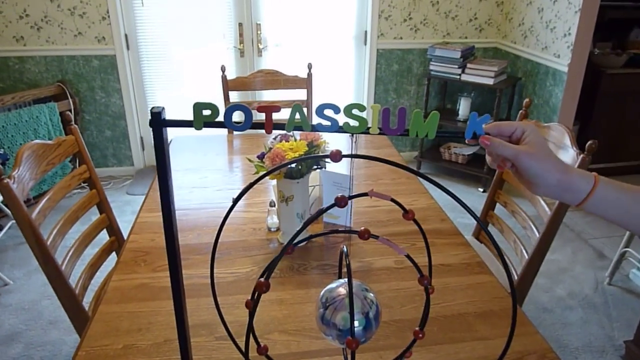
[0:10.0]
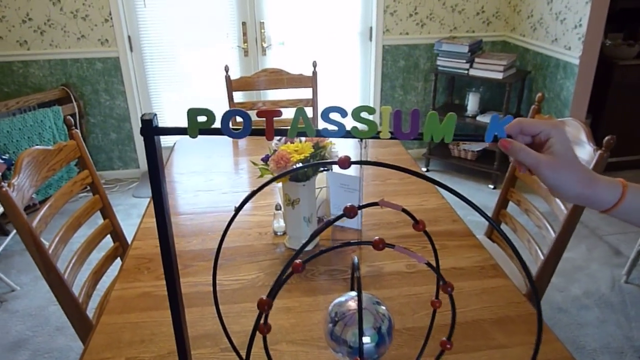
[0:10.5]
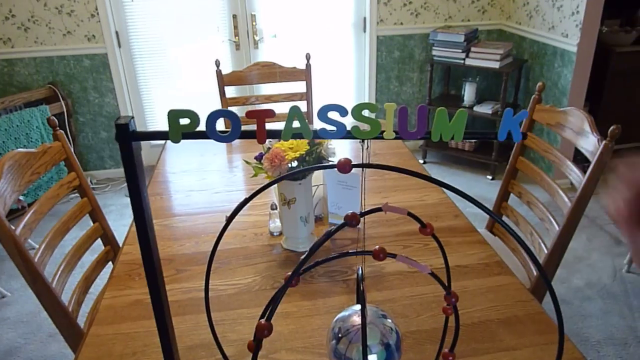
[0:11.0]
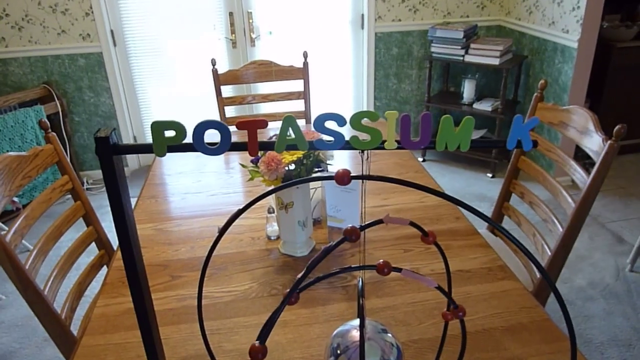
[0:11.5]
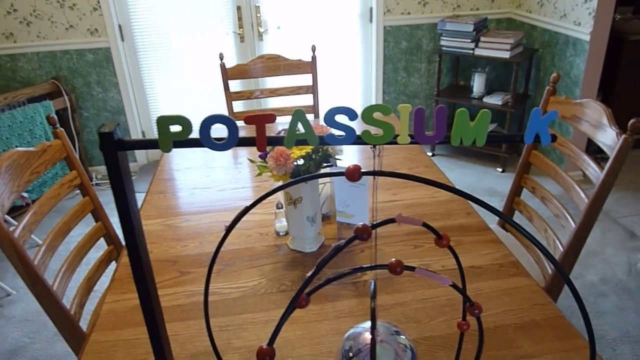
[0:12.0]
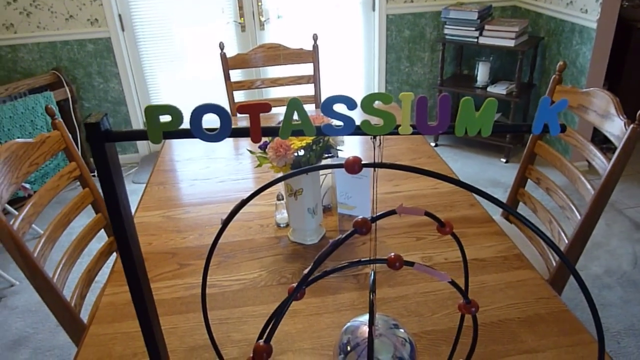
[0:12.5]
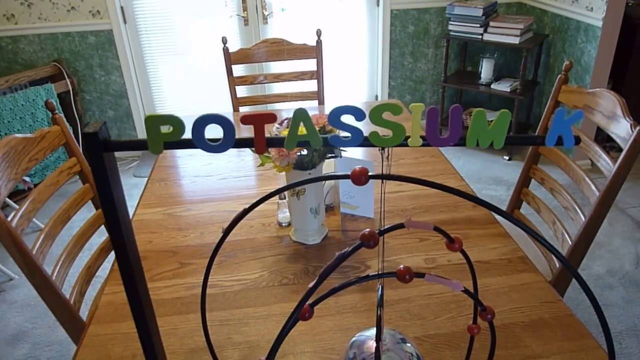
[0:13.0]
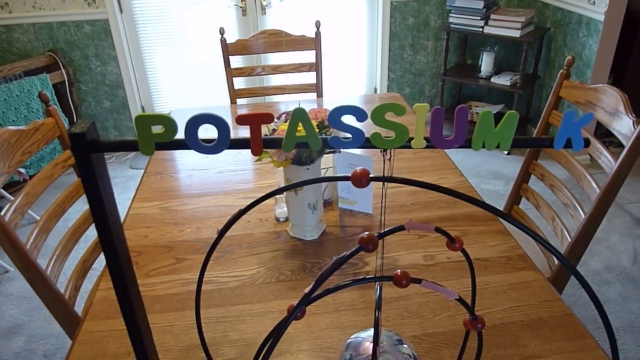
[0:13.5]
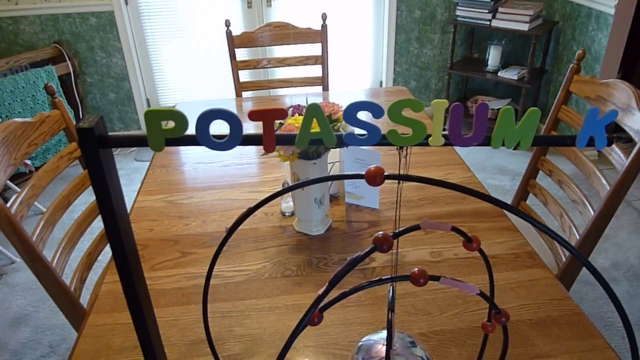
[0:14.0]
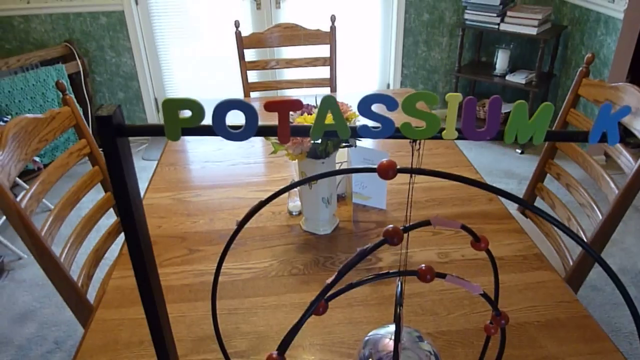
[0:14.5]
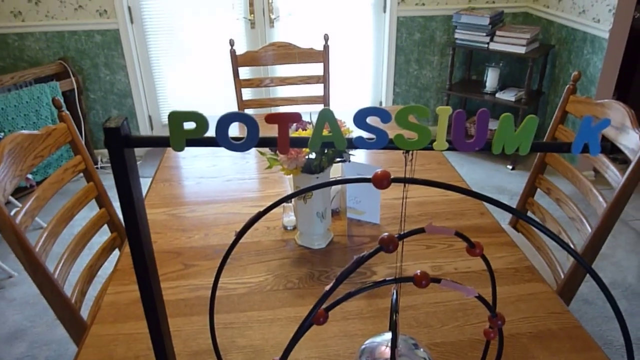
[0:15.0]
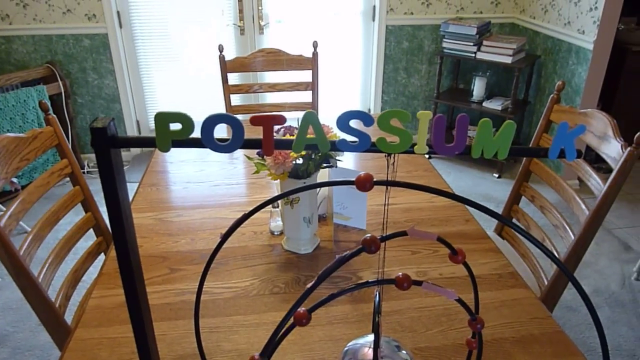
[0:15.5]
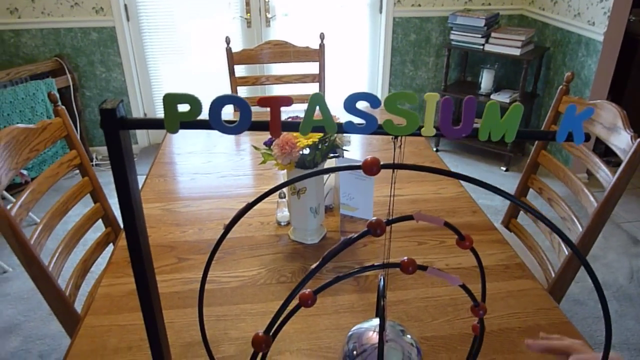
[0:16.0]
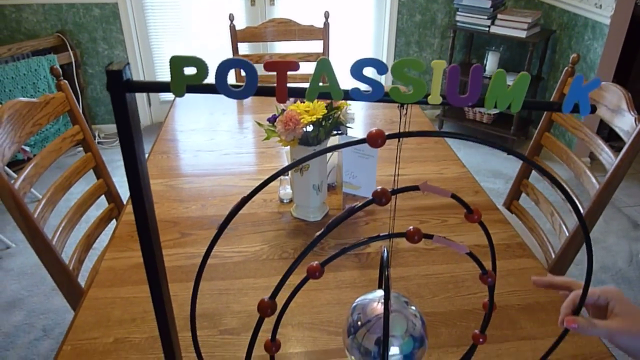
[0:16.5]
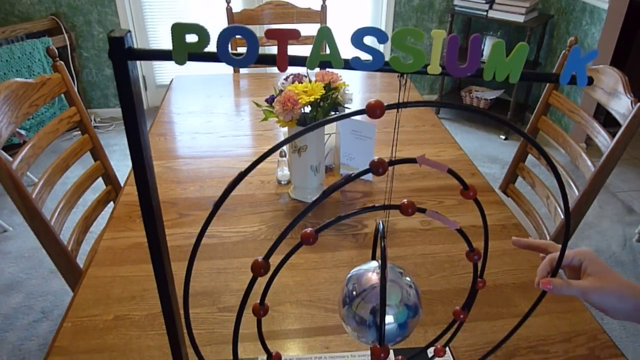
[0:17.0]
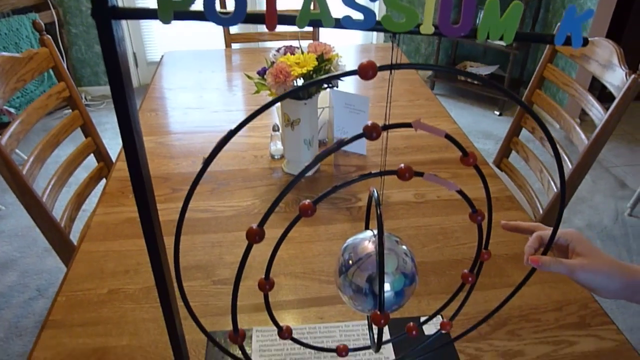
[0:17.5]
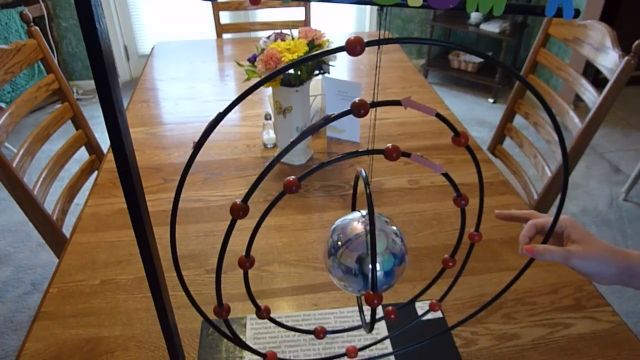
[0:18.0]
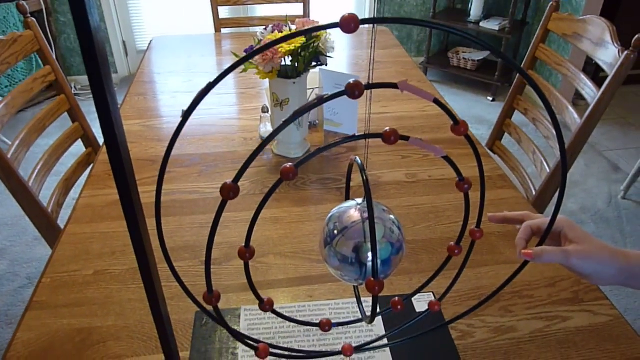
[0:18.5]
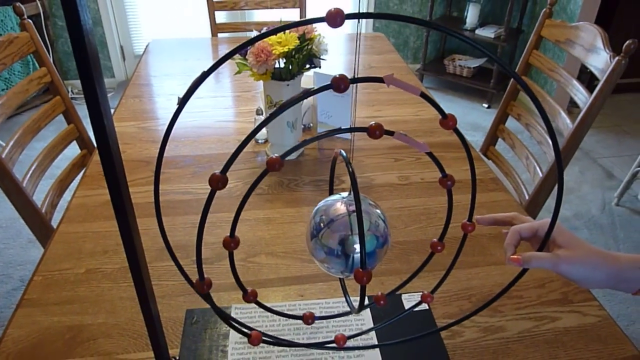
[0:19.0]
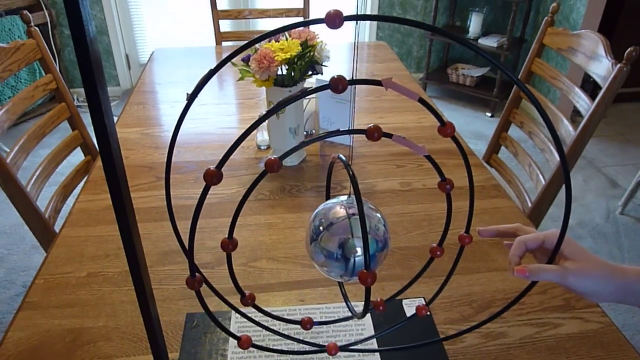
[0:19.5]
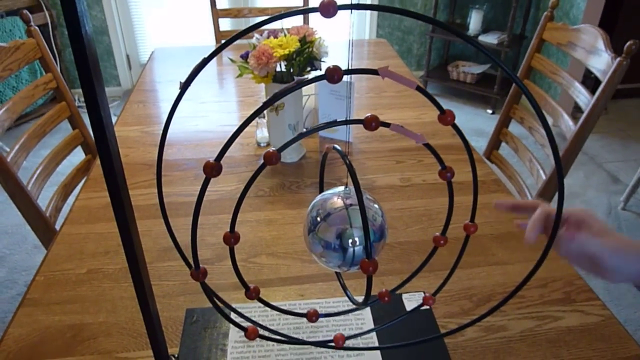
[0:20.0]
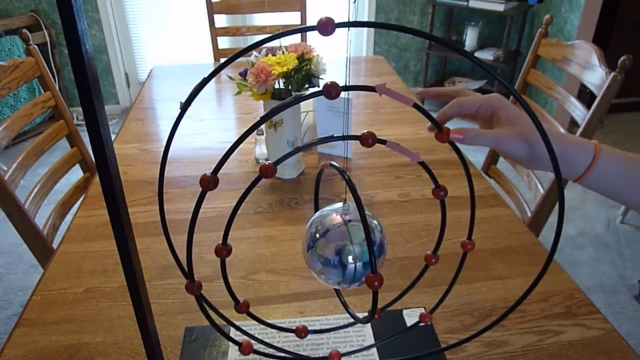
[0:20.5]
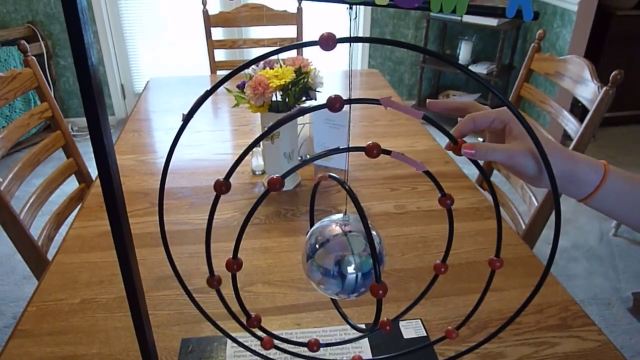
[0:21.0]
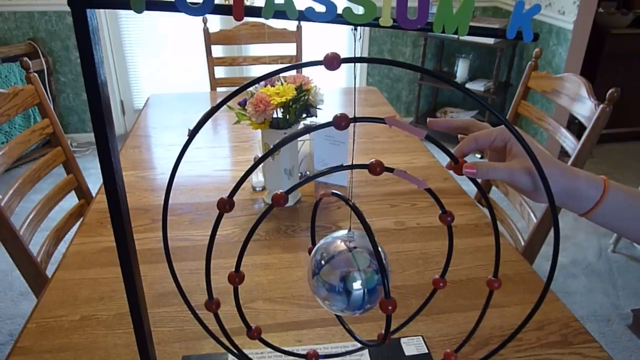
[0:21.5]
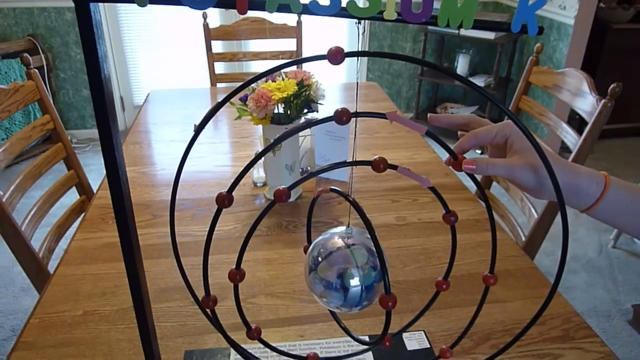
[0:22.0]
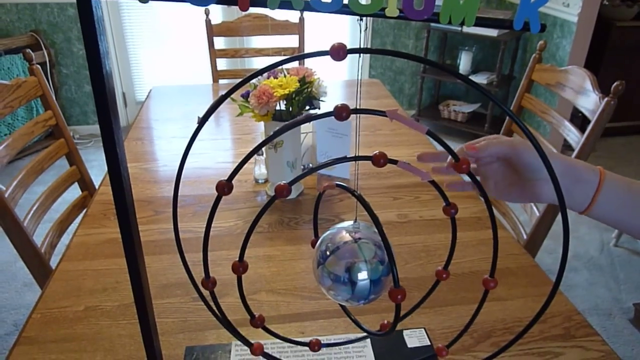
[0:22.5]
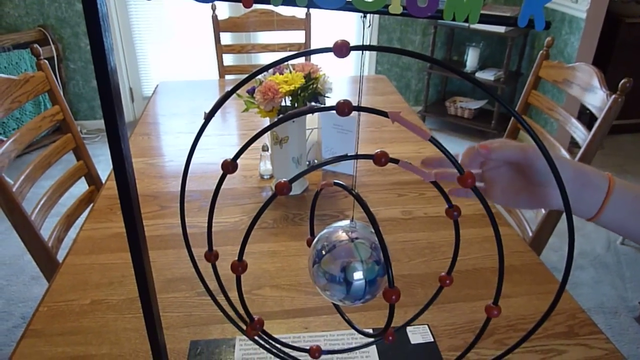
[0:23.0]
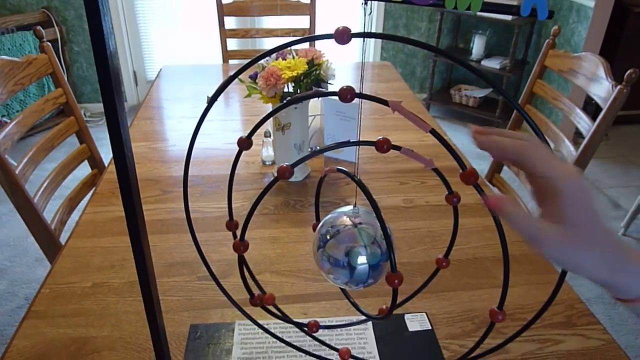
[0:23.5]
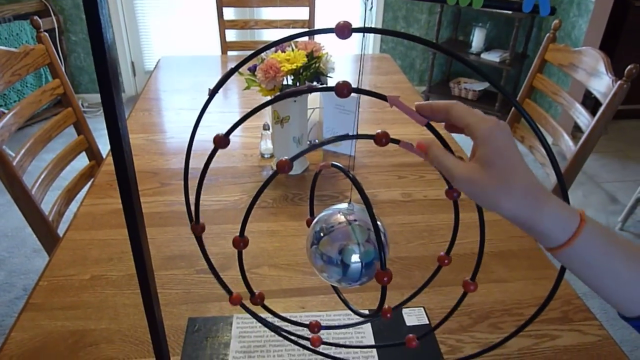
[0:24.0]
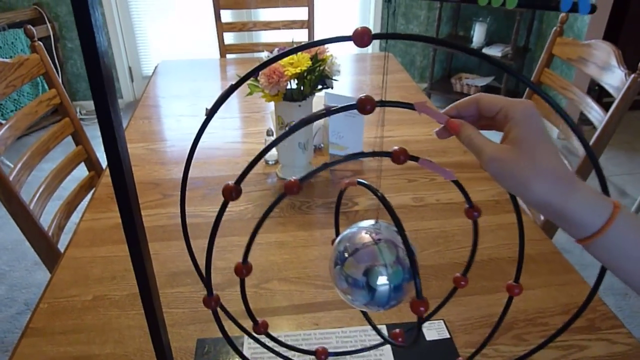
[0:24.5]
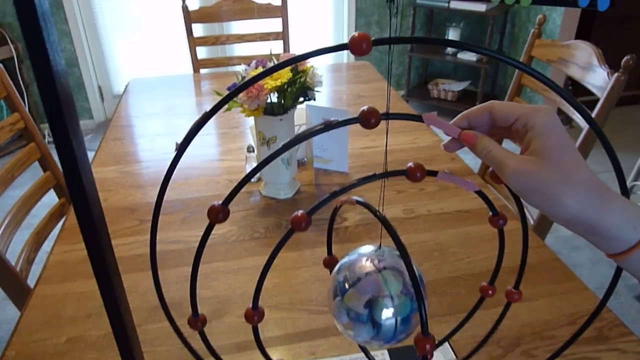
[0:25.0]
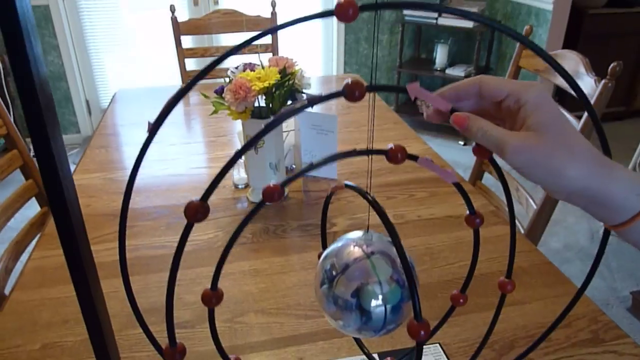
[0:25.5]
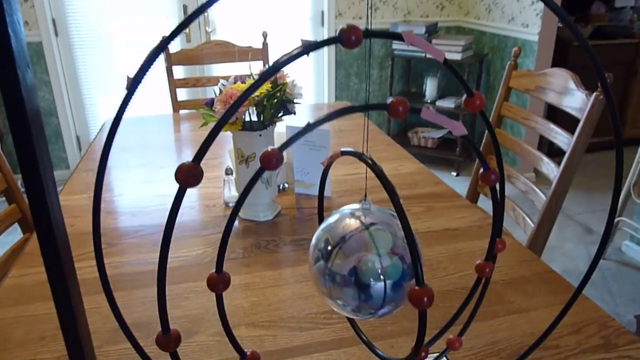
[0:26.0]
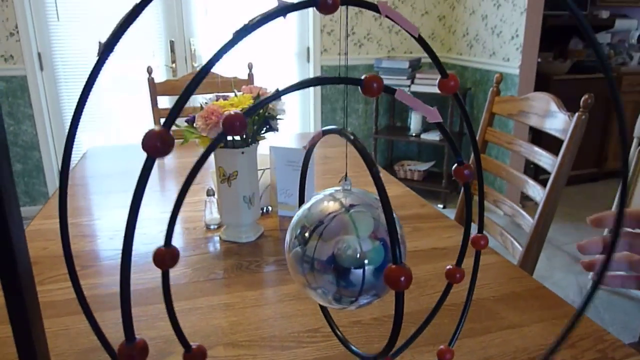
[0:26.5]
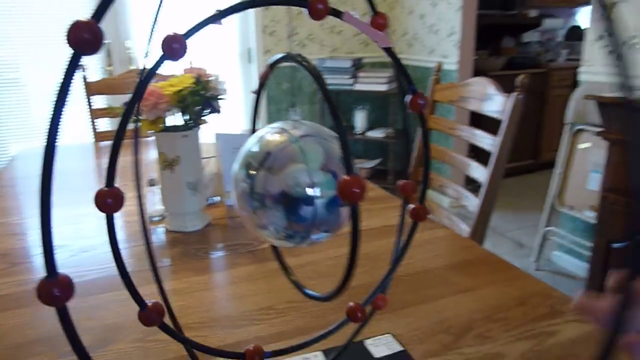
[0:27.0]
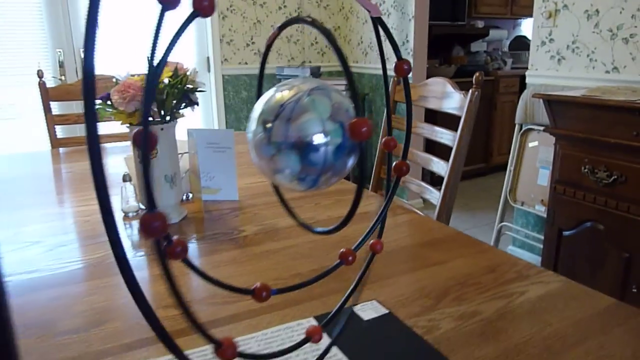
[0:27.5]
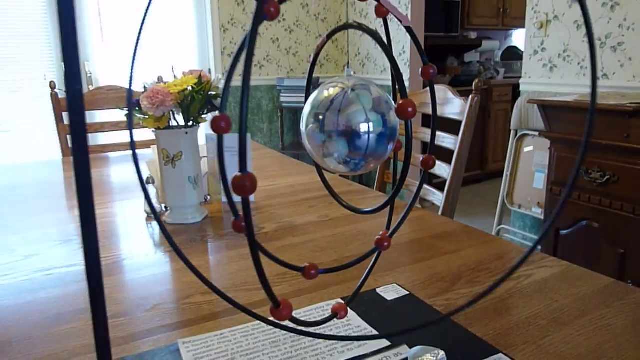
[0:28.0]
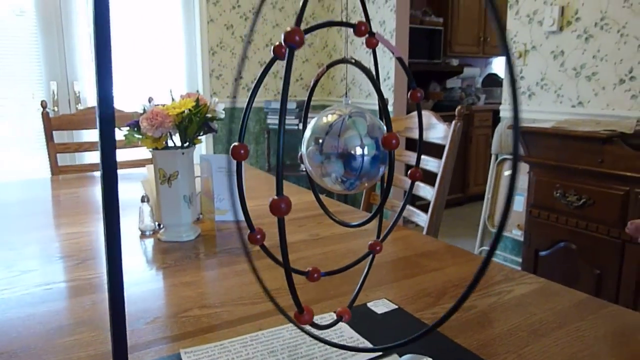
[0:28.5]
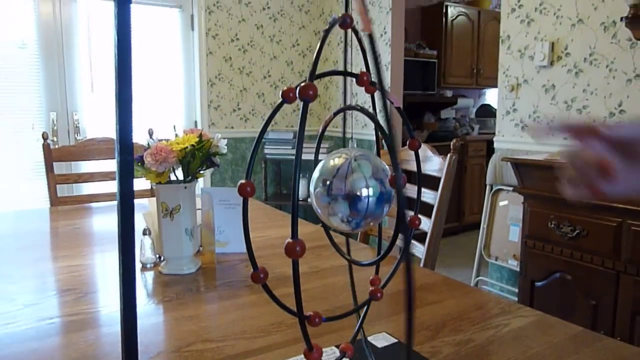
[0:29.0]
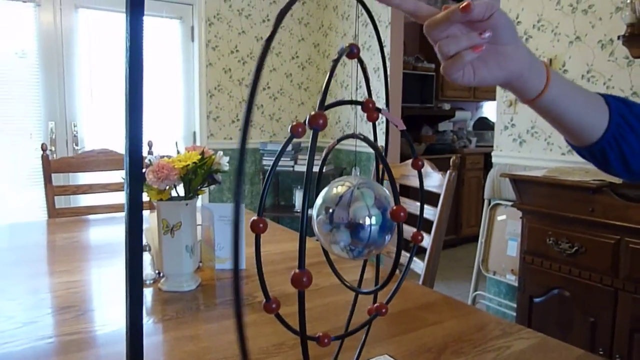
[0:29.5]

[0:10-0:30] The camera zooms in on the words "potassium K", which are very colorful, with green, red, purple and blue letters rather than a single color. The camera then moves lower and lower down the model for a closer, more detailed look. The woman holds the second outer ring, then holds the outermost, biggest ring and spins it around. The model is hanging off a string, apparently off multiple strings. A closer view shows yellow and pink flowers in a small white pot in the center of the table. Her pink nail polish is clearer, and she wears a yellow wristband on her wrist. Briefly, at the end, the camera looks toward the right, showing a big brown wooden dresser.